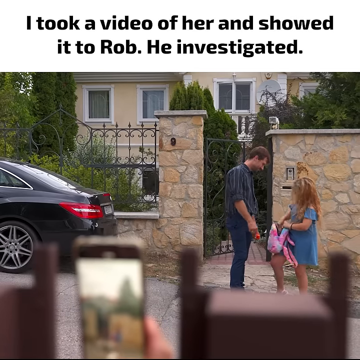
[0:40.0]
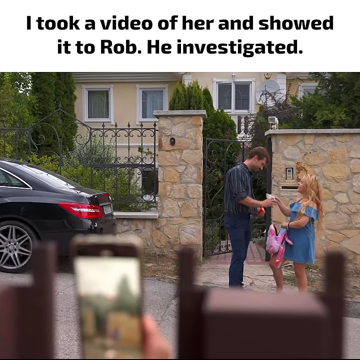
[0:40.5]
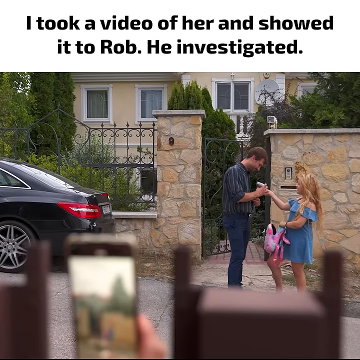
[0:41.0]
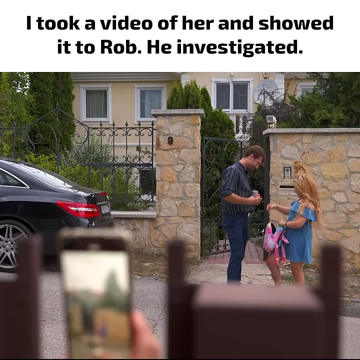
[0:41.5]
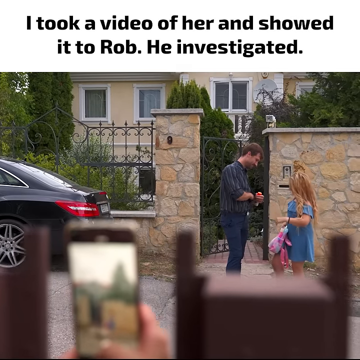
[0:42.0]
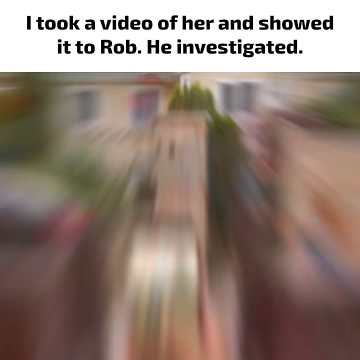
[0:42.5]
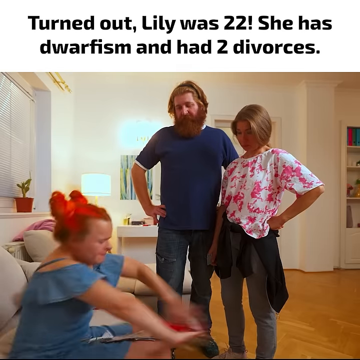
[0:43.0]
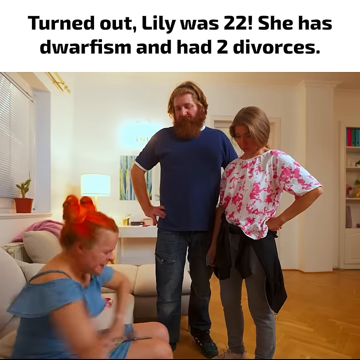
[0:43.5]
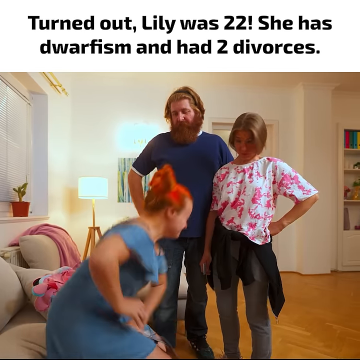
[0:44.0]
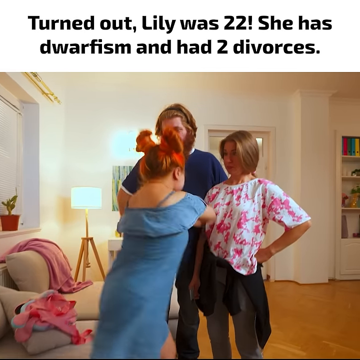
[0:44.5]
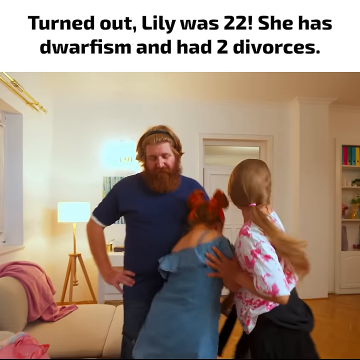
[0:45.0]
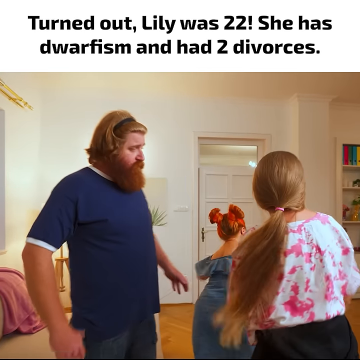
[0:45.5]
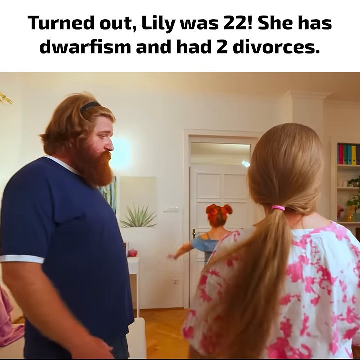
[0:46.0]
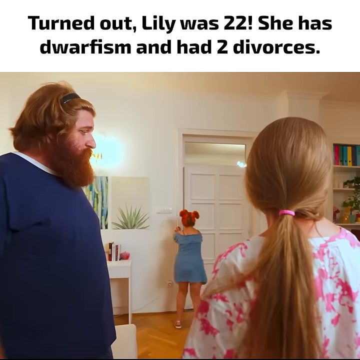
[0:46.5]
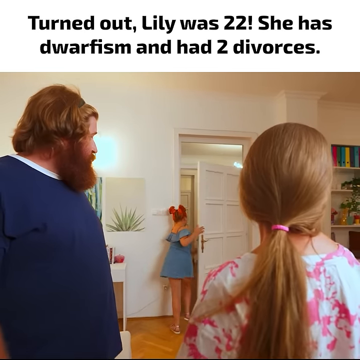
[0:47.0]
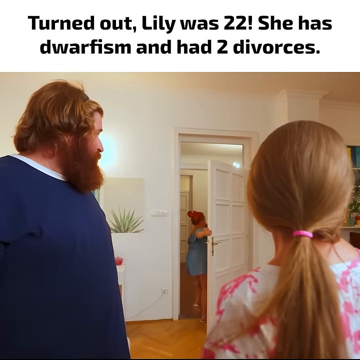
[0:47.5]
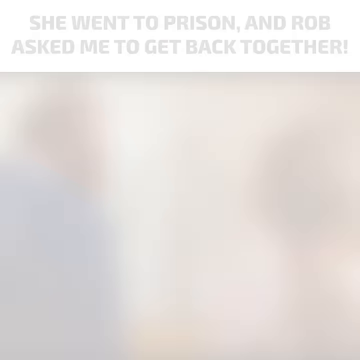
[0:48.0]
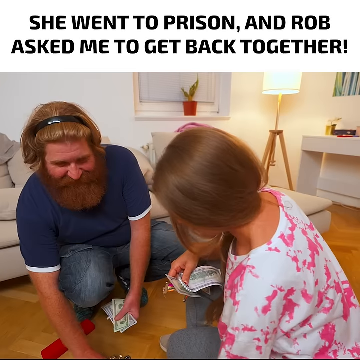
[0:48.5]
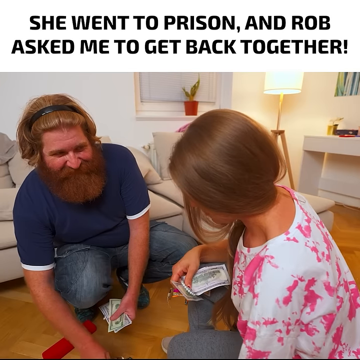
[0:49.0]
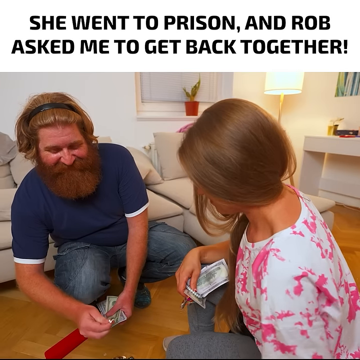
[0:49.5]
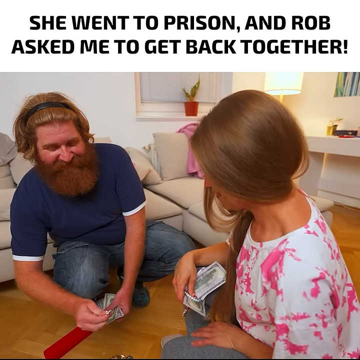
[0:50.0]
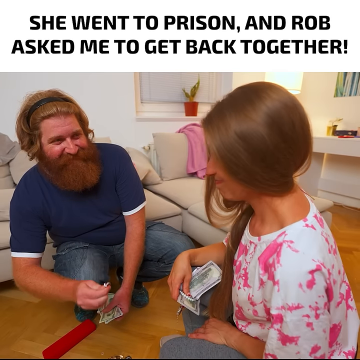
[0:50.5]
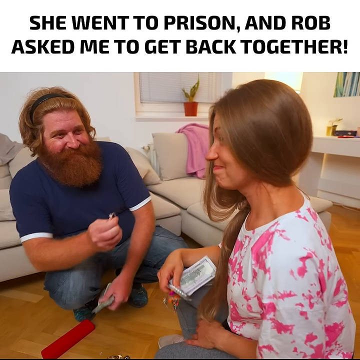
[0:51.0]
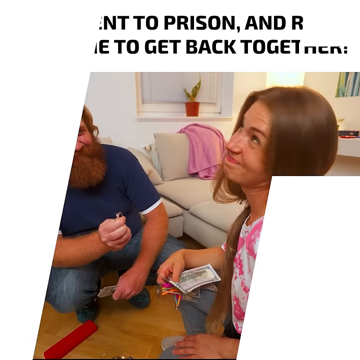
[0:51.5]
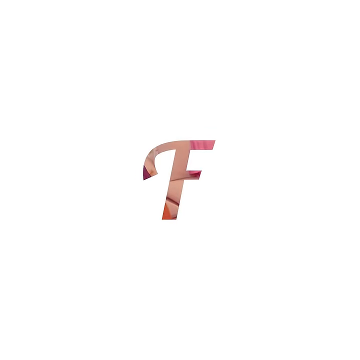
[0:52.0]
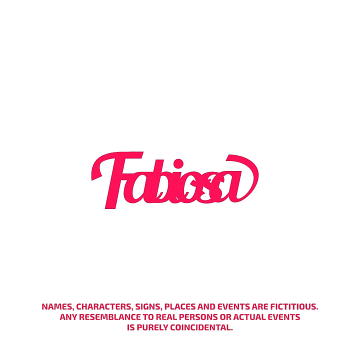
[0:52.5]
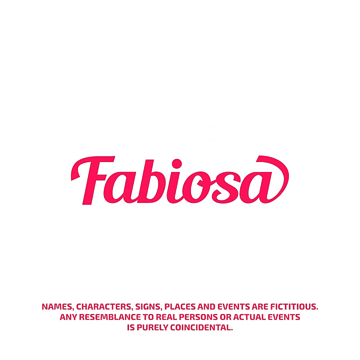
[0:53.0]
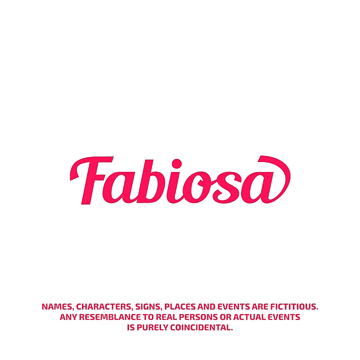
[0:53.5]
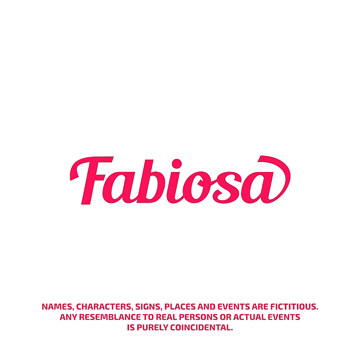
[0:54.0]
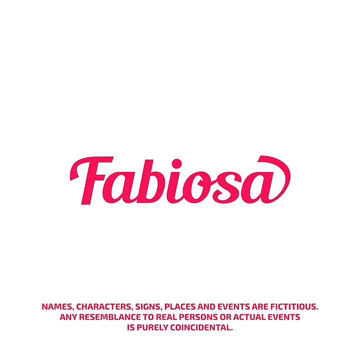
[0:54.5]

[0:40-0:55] The story continues with rolling titles such as "I showed it to Lily who was 22, she had dwarfism and had two divorces. She went to prison and Rob asked to get back together again." The name Fabiosa then appears. A tag at the bottom of the final frame states that names, places and events are fictitious and any resemblance to real persons or actual events is purely coincidental. The actors are overly dramatic, with elaborate pulled faces, mugging for the camera, waving their hands in the air and overly cutesy facial expressions. The production values are low. The video is in a letterbox style with black borders and a white strip down the middle where the story plays, and it is tagged as being from Fabiosa.